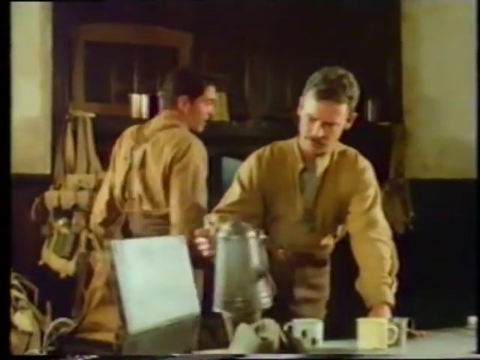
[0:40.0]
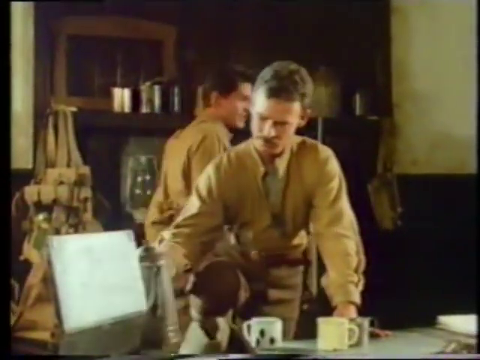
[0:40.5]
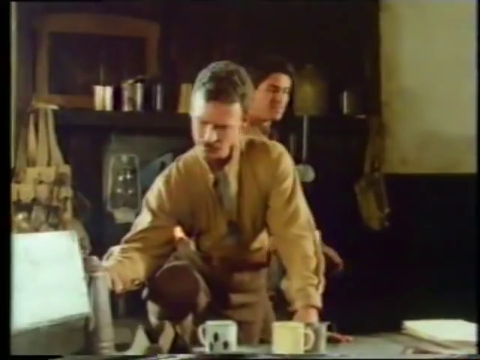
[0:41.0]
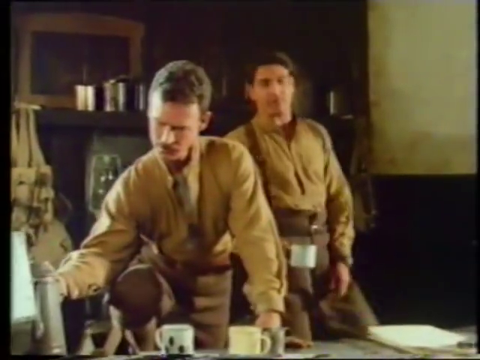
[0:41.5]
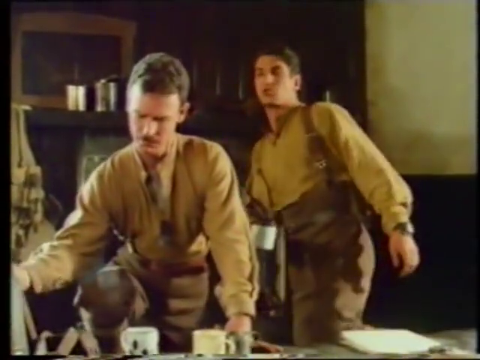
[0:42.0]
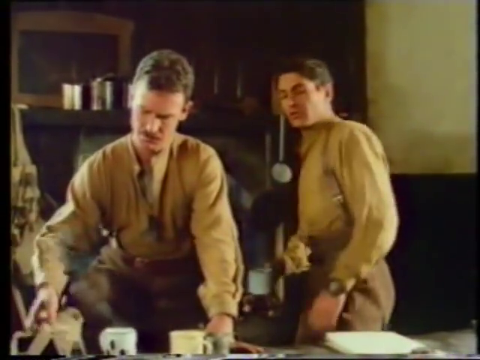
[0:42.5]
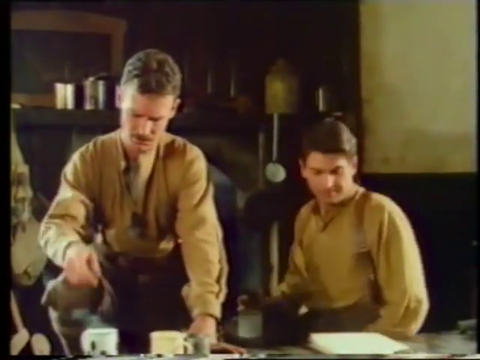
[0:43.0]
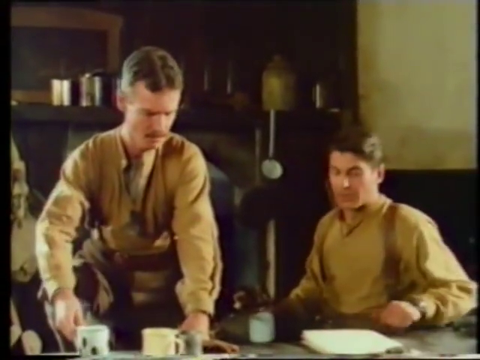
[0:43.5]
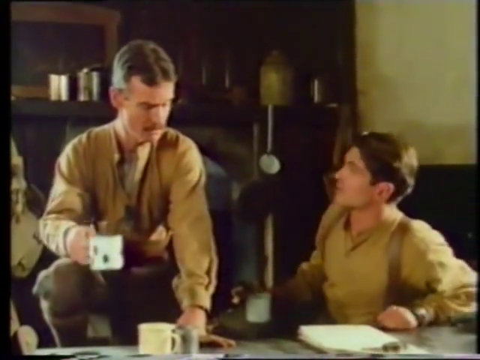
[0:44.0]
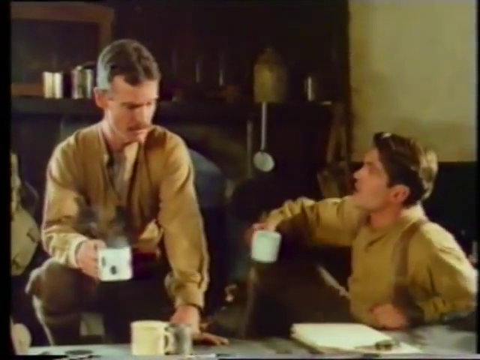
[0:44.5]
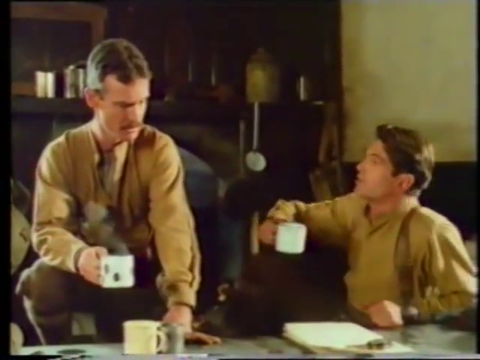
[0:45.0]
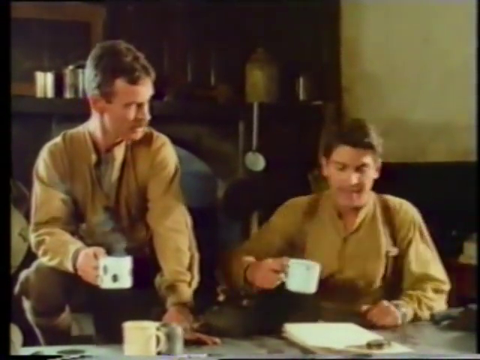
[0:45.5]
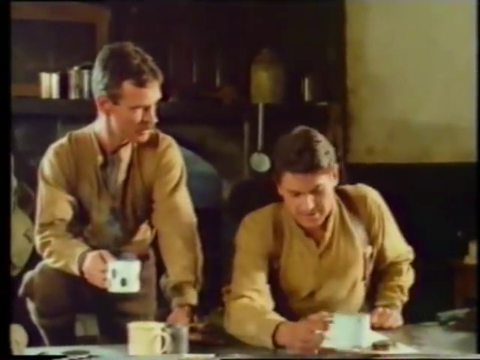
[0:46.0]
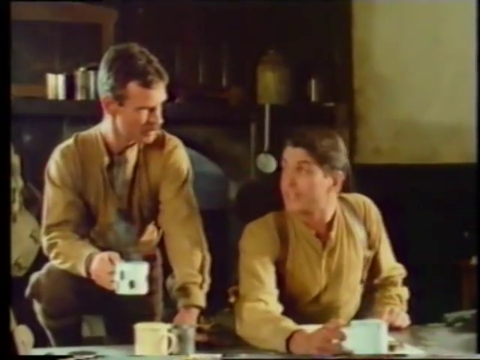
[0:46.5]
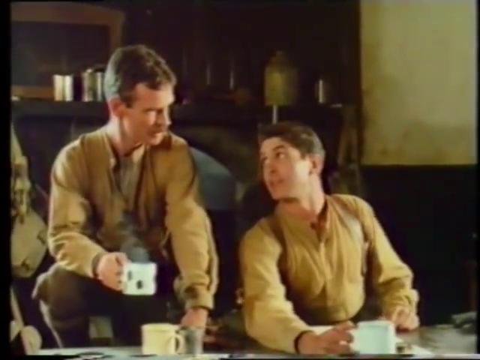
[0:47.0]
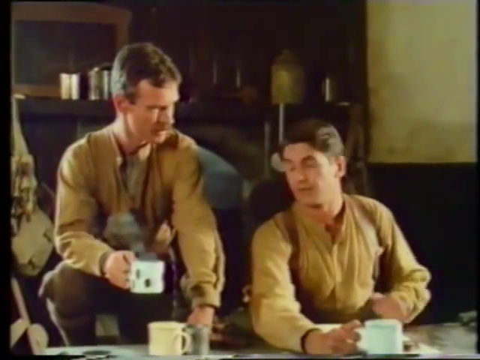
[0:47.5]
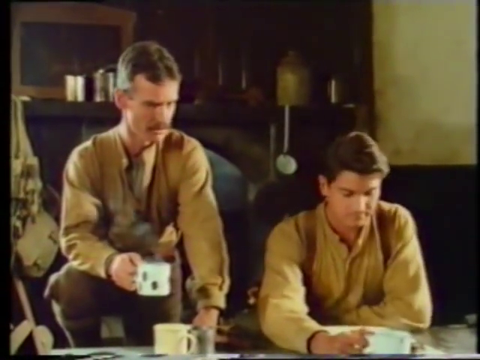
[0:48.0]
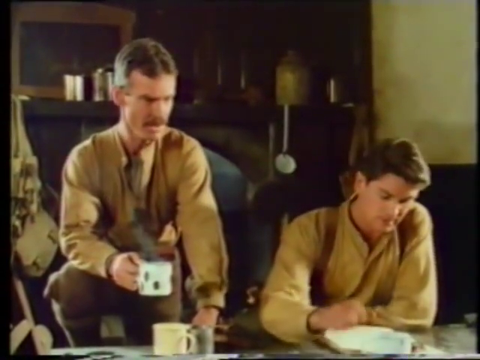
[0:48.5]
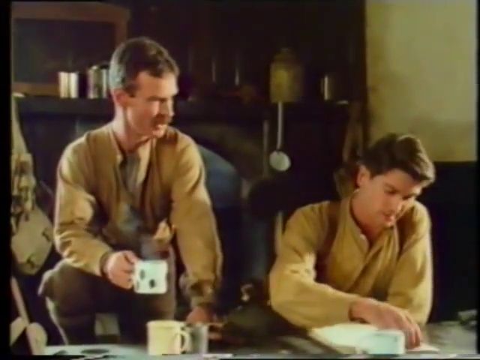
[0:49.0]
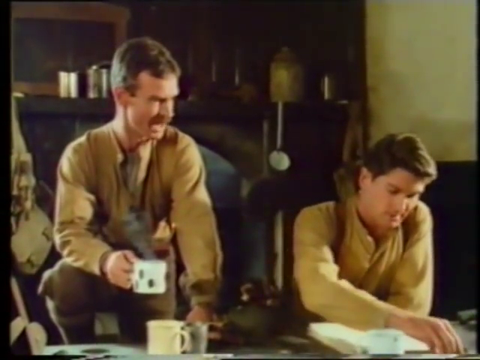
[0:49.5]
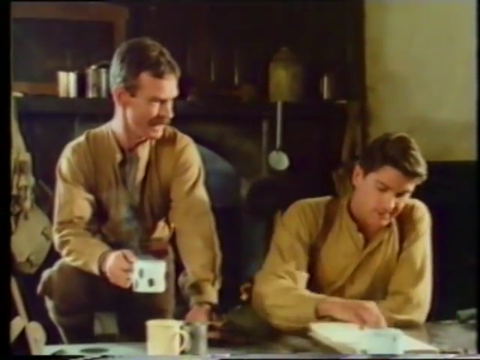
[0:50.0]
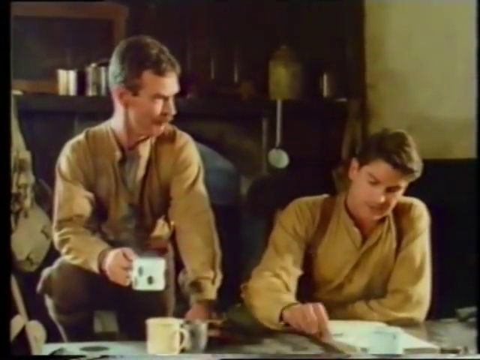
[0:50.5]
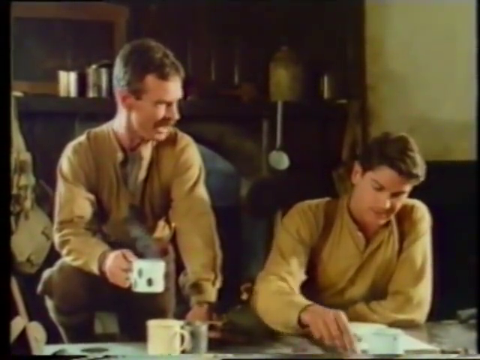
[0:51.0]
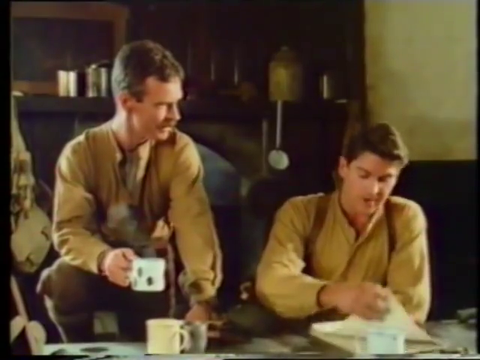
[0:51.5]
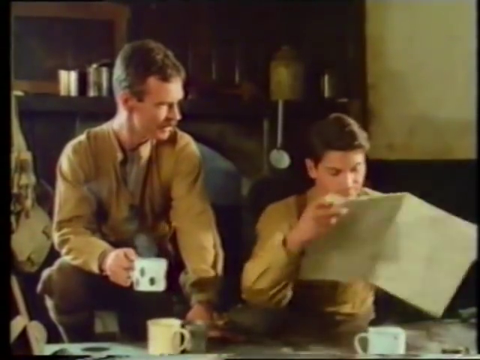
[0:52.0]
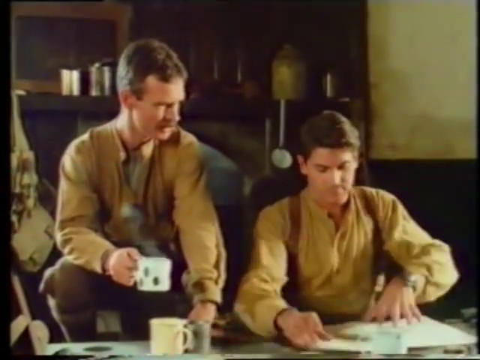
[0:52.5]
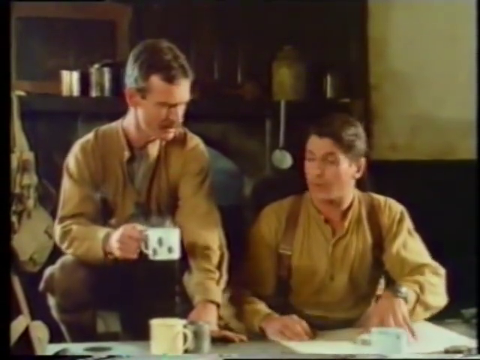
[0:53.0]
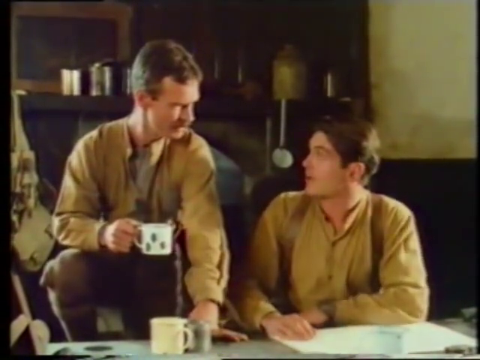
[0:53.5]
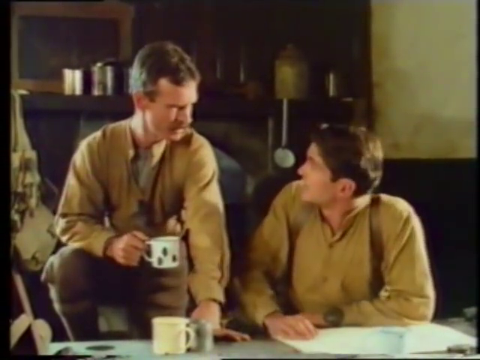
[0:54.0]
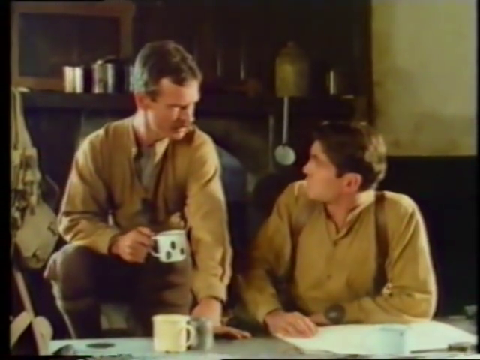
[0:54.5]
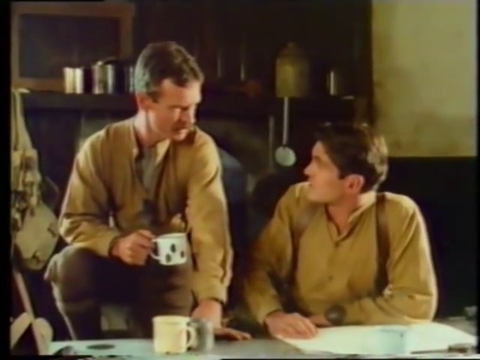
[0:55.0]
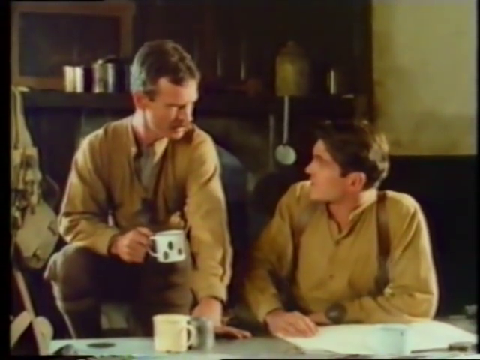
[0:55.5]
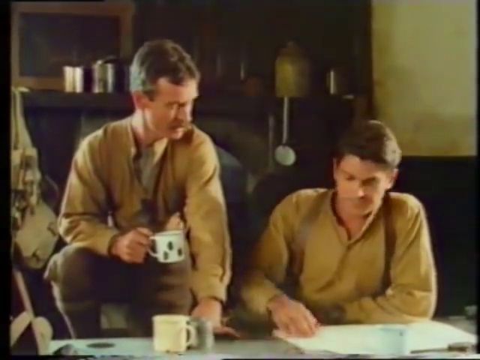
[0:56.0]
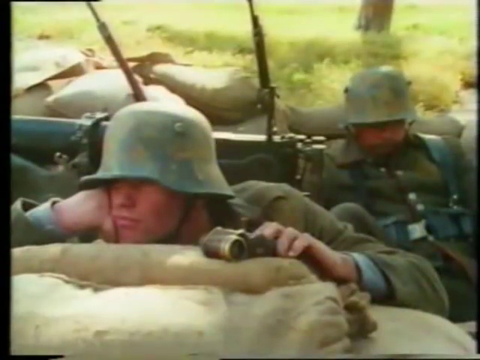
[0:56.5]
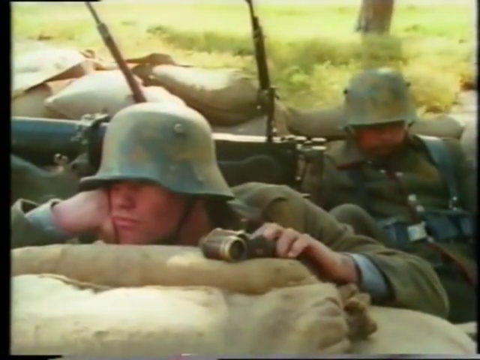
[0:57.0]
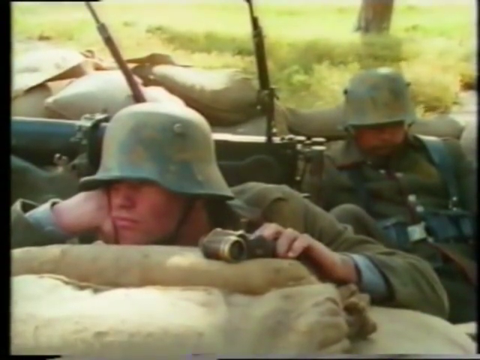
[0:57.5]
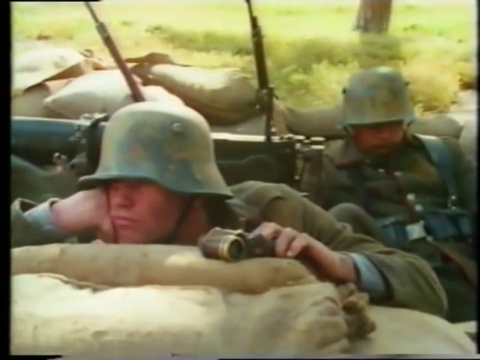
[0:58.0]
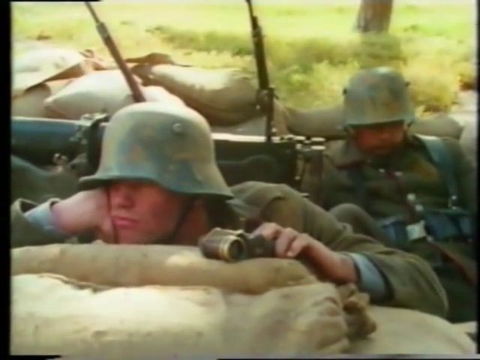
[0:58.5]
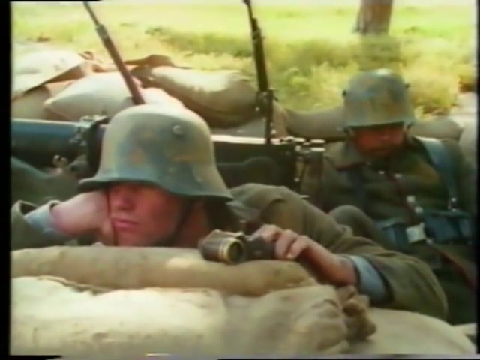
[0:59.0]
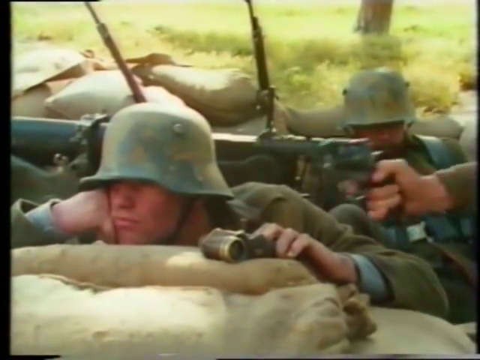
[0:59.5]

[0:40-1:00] Two men are close to a table; one has his leg on top of a chair and bends toward the table. The other comes with a kettle filled with hot boiling water and pours the water into a cup, and the first man takes the cup and sips from it. They have a short conversation. The man sipping the tea puts his feet down and walks away from the table. On the table are tea cups and a cup, and behind it is a long shelf with some candles, some cups and a bag. The man turns around and goes to sit on the right-hand side of the table. He takes a paper, opens it and talks a bit to the other man. In the next scene, a group of armed military men in the jungle take position, aiming to shoot at their target.